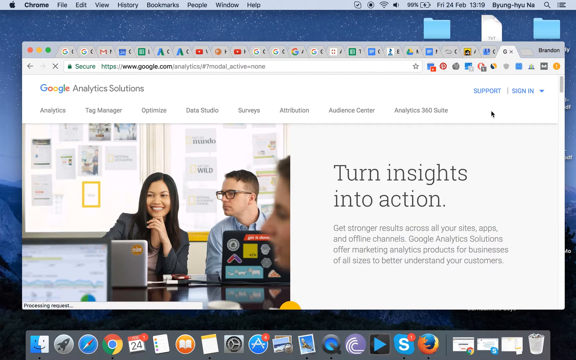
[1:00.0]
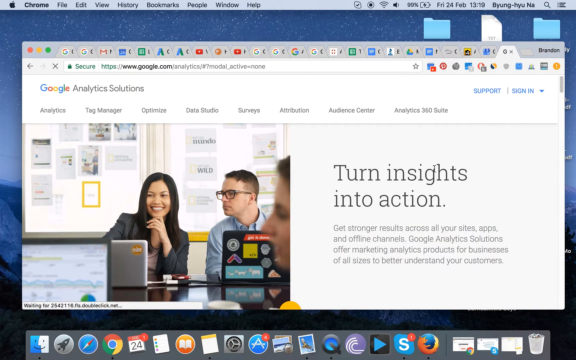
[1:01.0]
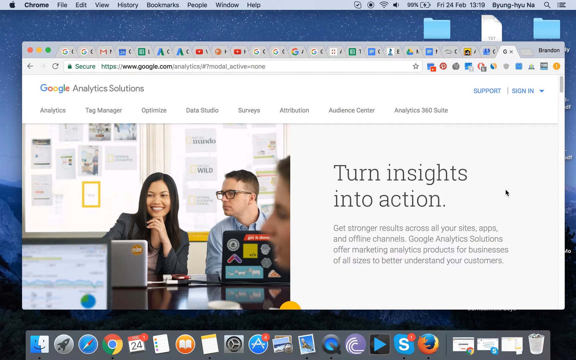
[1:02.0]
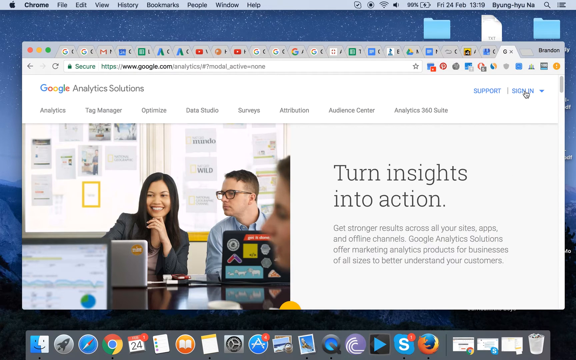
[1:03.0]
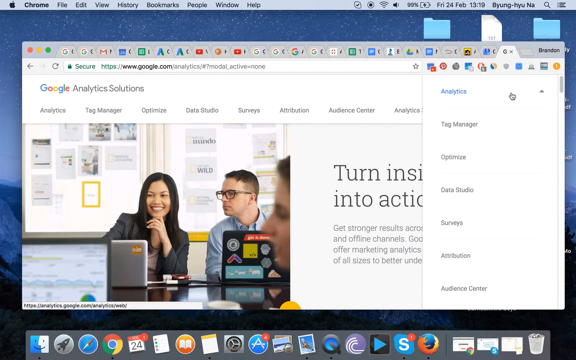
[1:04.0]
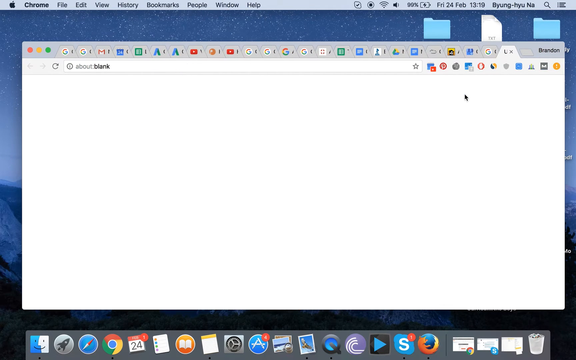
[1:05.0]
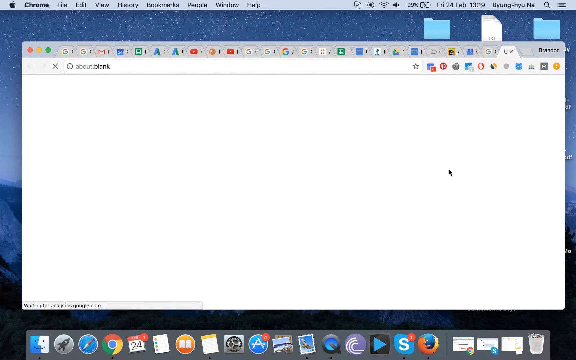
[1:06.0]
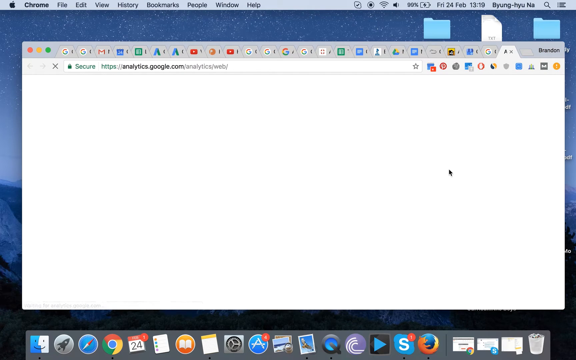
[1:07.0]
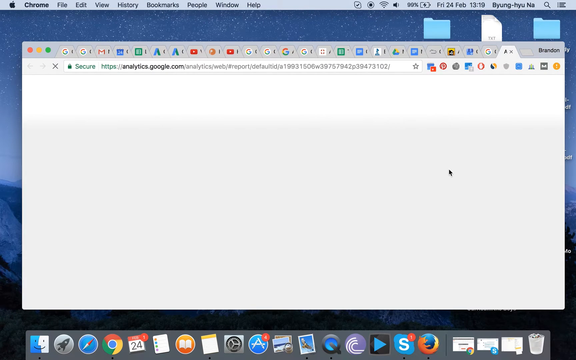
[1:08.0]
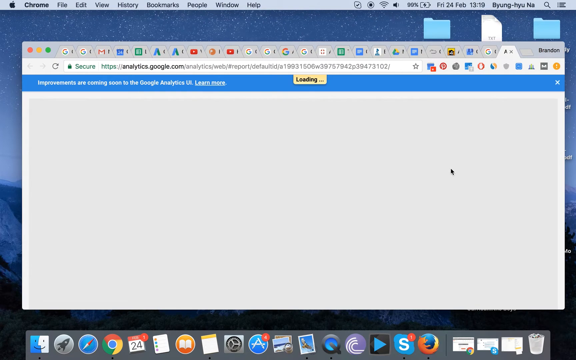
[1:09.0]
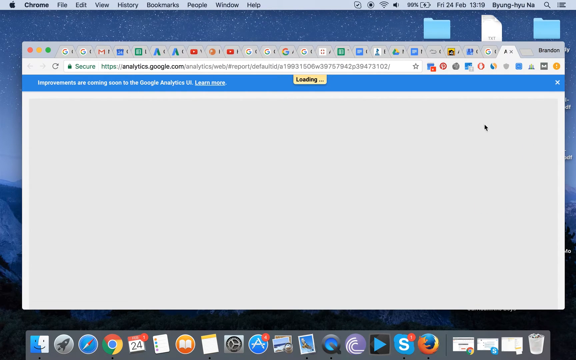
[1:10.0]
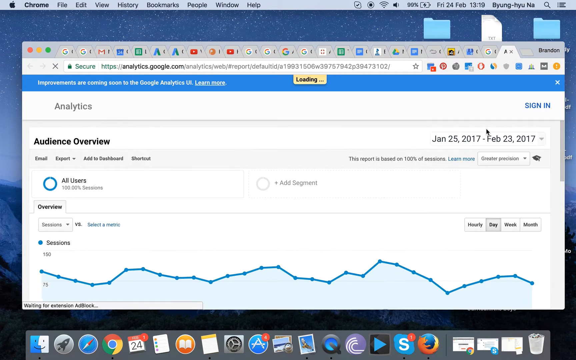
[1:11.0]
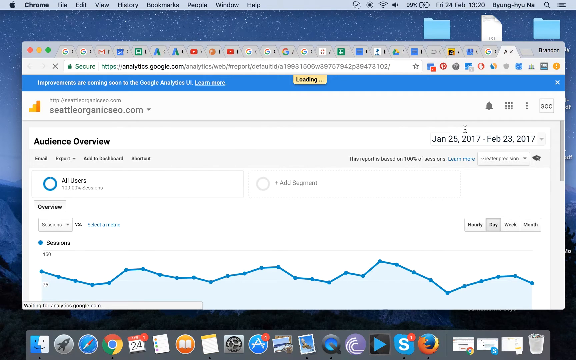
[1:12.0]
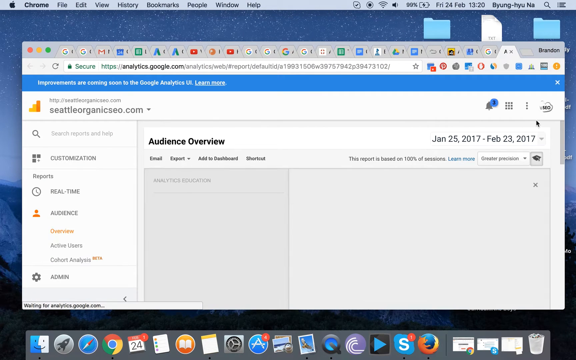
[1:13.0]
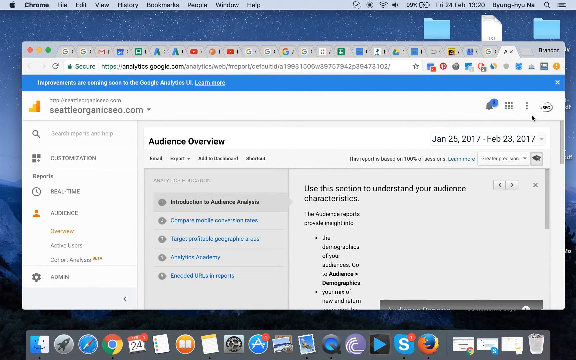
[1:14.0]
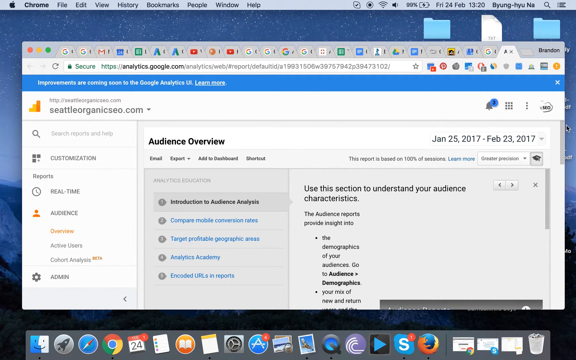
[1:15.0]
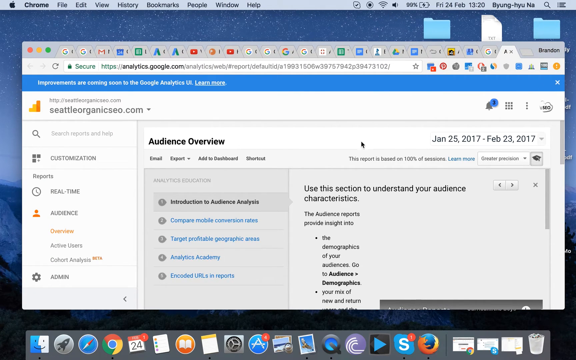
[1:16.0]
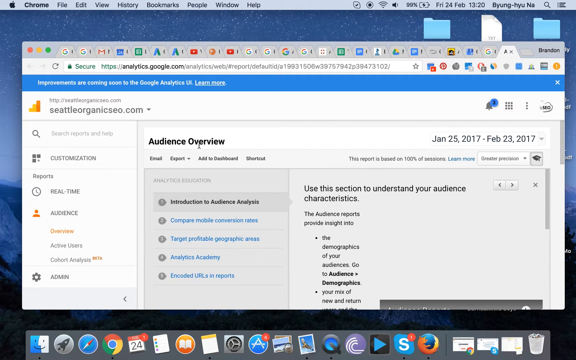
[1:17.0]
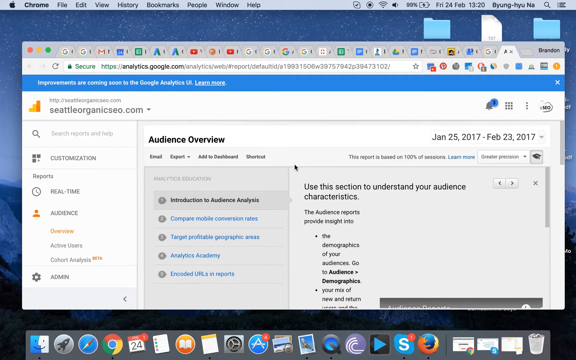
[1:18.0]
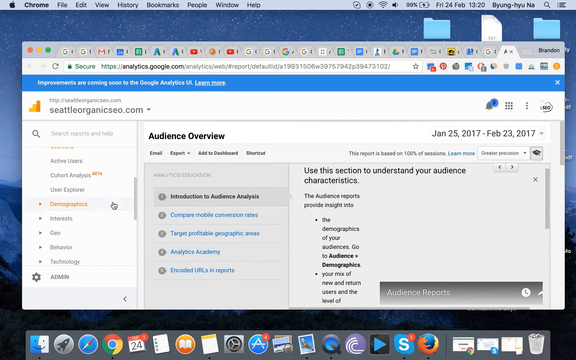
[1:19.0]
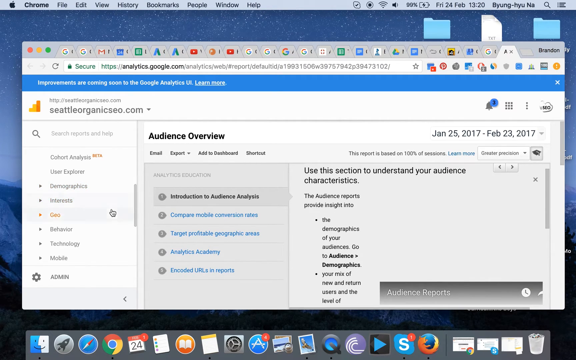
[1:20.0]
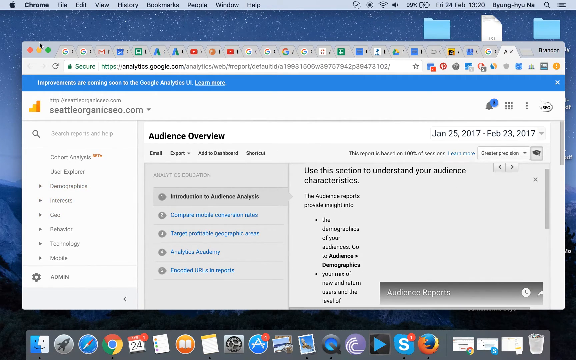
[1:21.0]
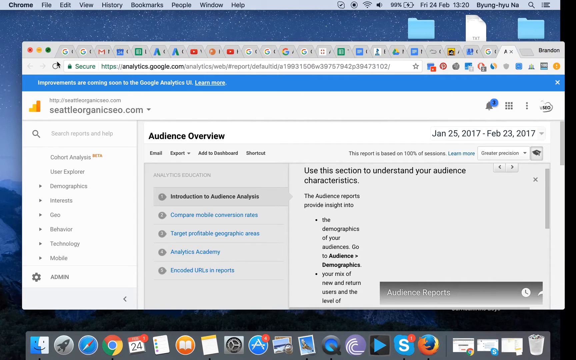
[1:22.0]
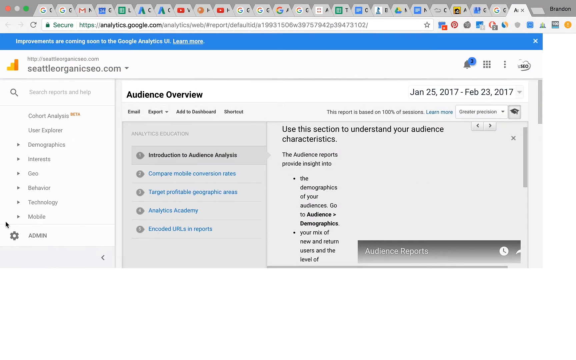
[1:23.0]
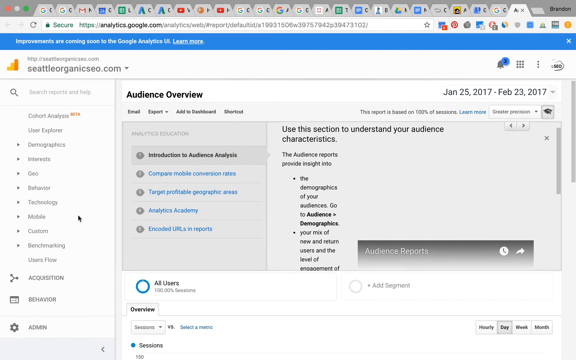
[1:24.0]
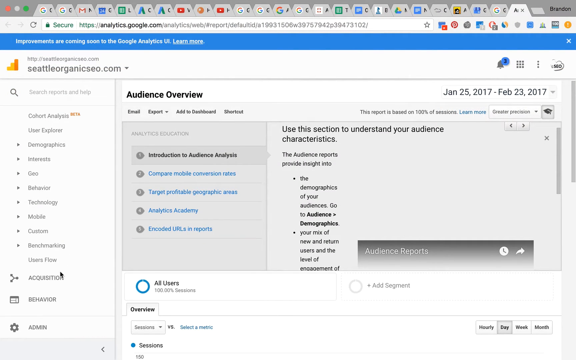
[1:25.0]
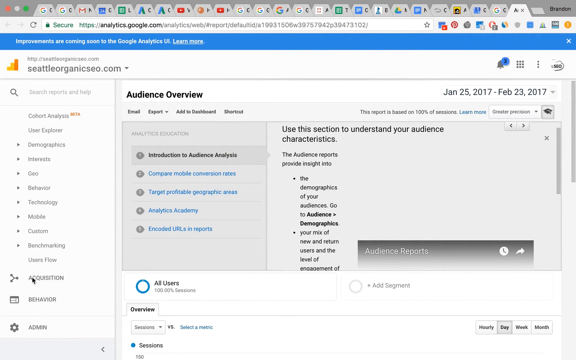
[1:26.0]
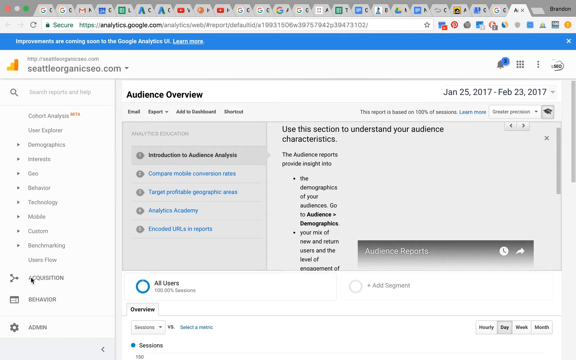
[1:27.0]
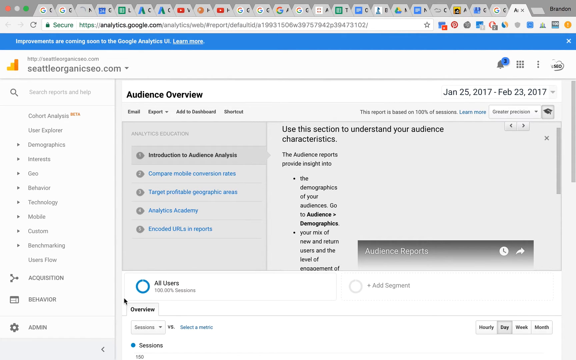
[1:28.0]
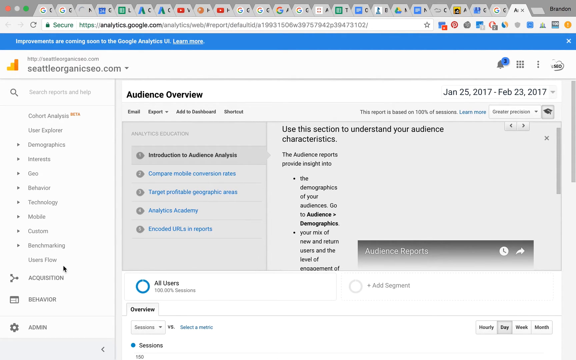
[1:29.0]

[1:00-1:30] A google.com analytics page is open on the computer screen, showing "modal active equals none", and the page says "Google analytics solutions". On the right-hand side is a paragraph titled "turn insights into actions" that reads "get stronger results across all your sites apps and offline channels Google analytics solutions offer marketing analytics products for businesses of all sizes to better understand your customers". The arrow cursor moves and clicks on a drop-down menu, and the next page says "Loading" and has a graph on it. A click on a different spot brings up an audience overview. The cursor goes up and clicks the green circle in the very upper left-hand corner, then moves left and right in the lower left-hand corner.